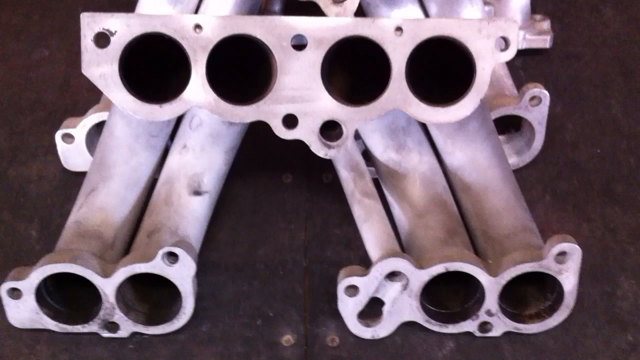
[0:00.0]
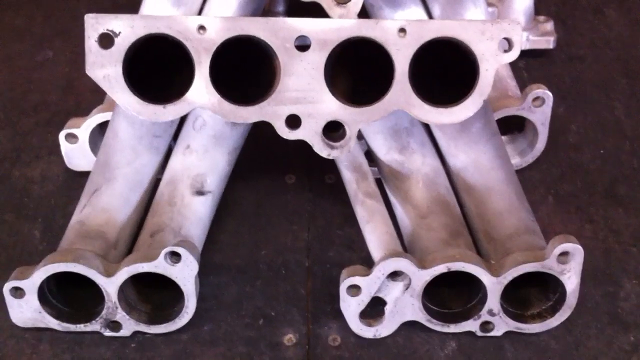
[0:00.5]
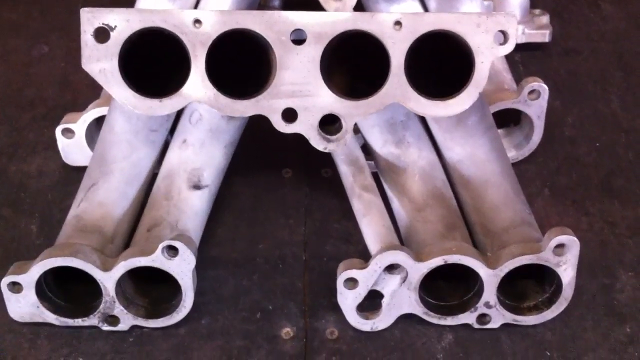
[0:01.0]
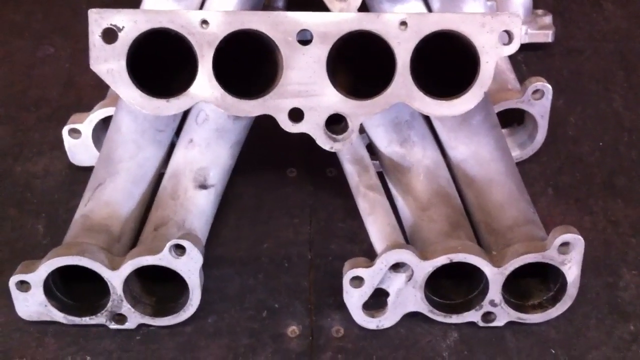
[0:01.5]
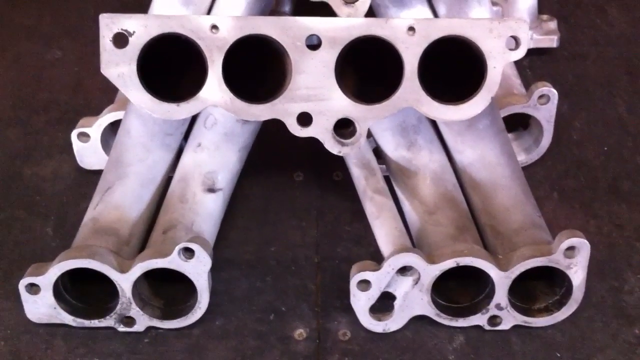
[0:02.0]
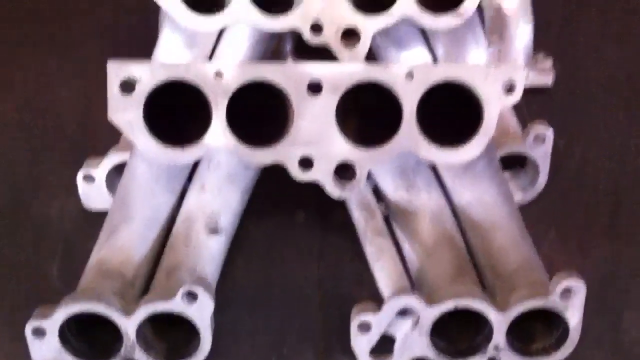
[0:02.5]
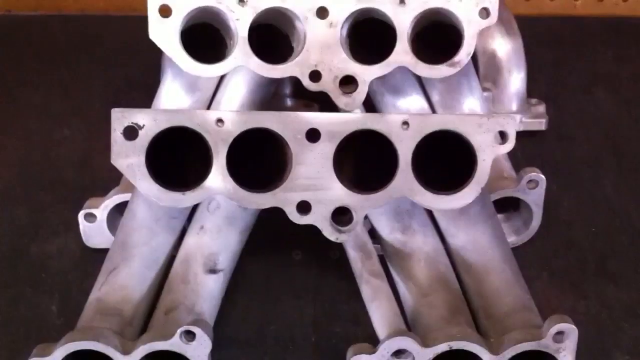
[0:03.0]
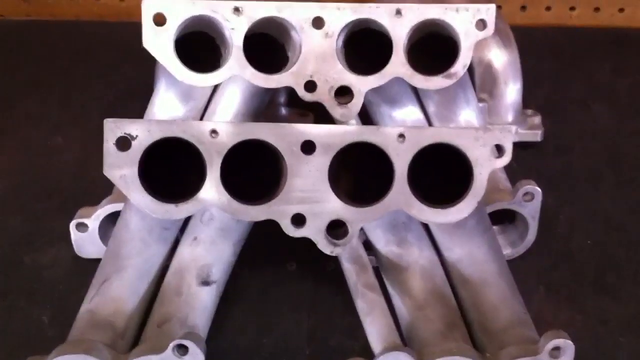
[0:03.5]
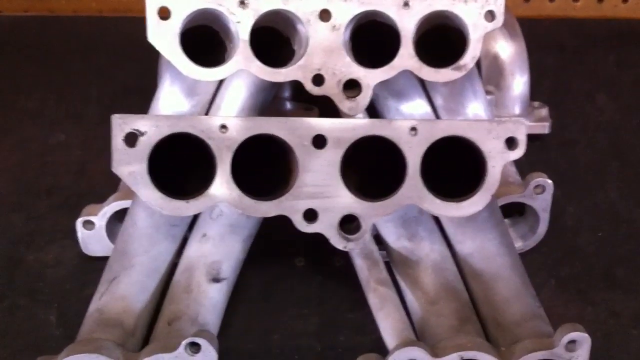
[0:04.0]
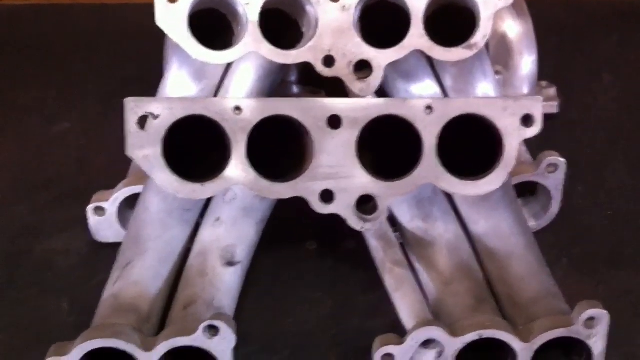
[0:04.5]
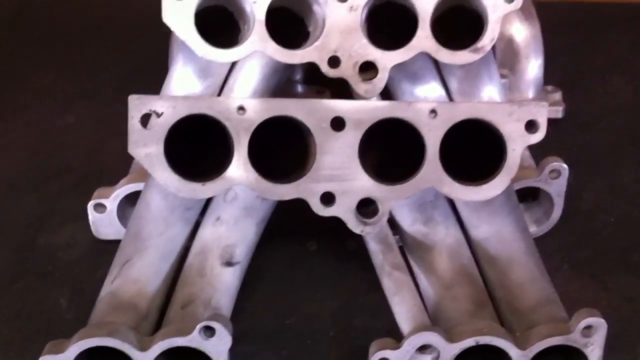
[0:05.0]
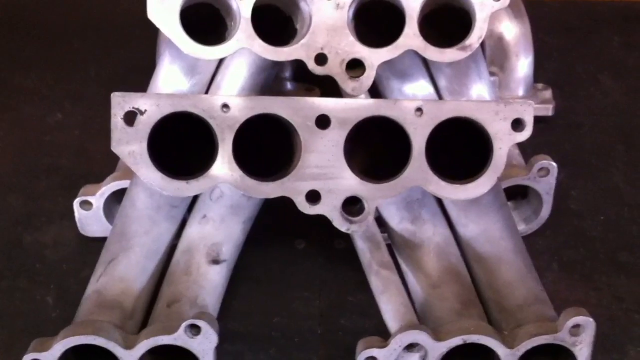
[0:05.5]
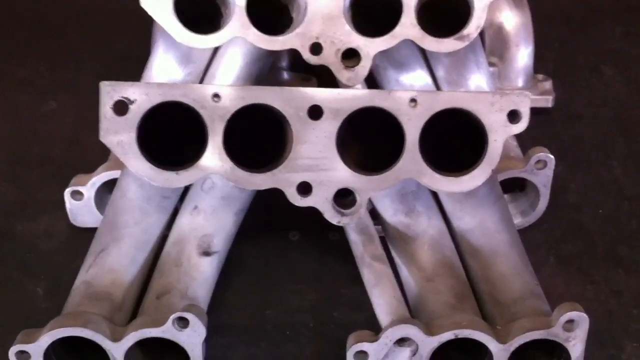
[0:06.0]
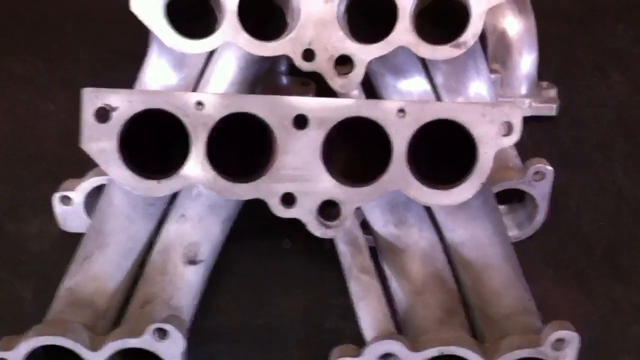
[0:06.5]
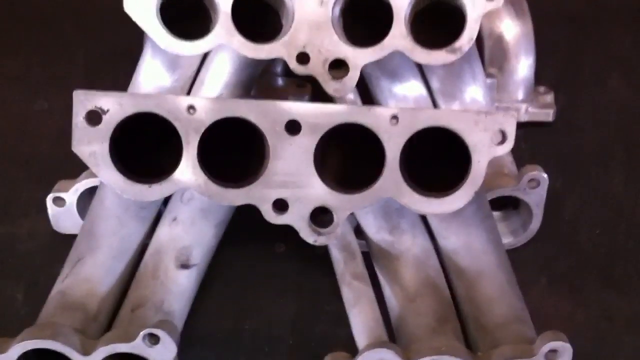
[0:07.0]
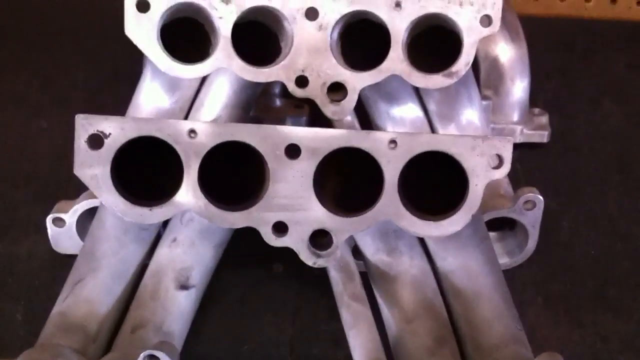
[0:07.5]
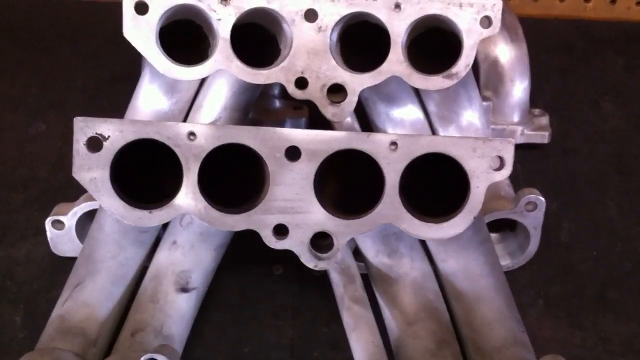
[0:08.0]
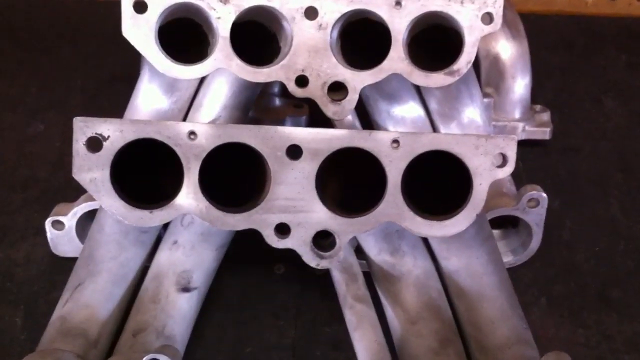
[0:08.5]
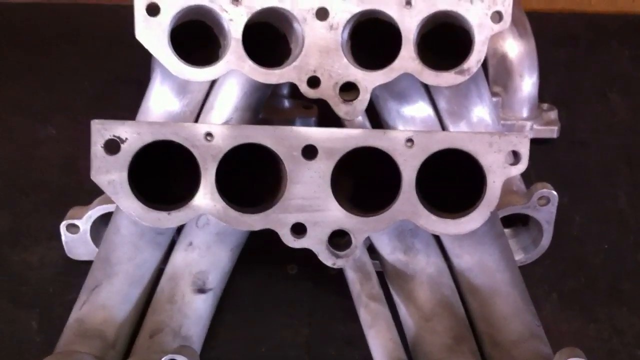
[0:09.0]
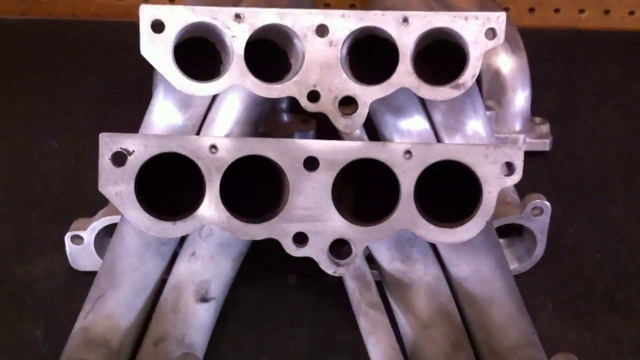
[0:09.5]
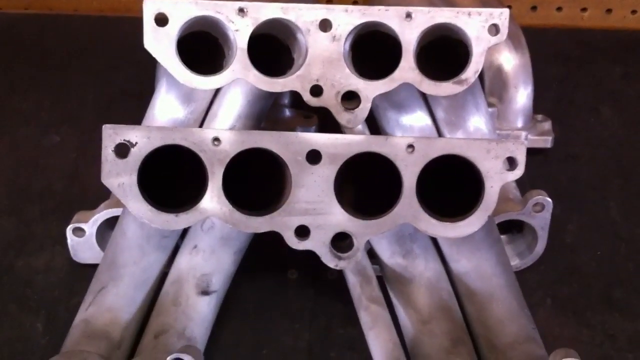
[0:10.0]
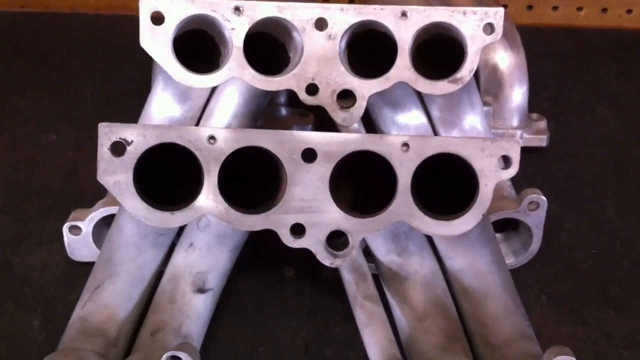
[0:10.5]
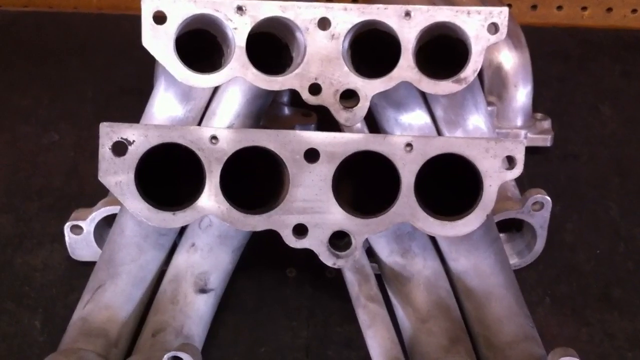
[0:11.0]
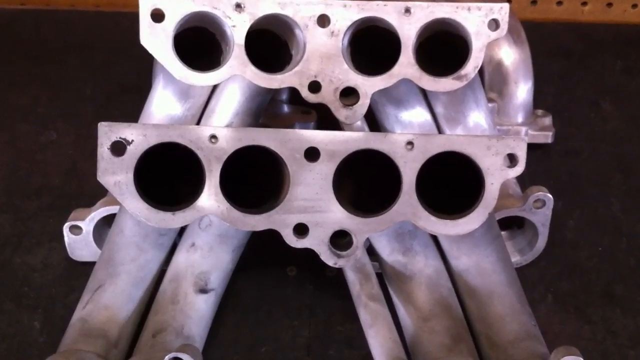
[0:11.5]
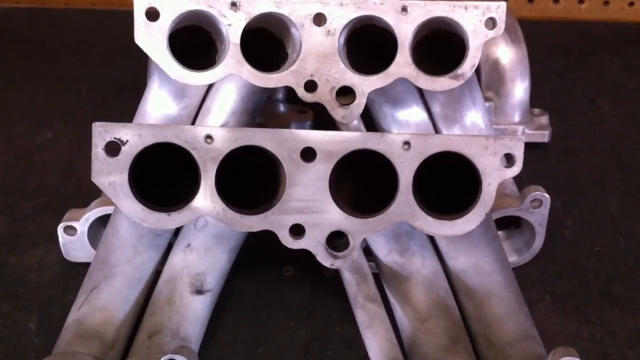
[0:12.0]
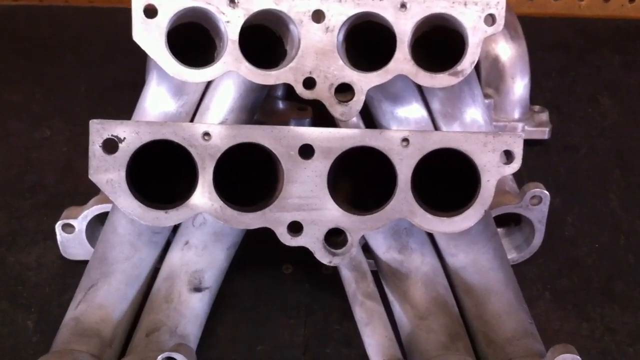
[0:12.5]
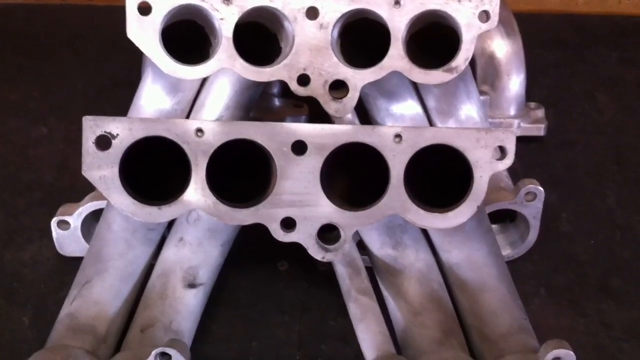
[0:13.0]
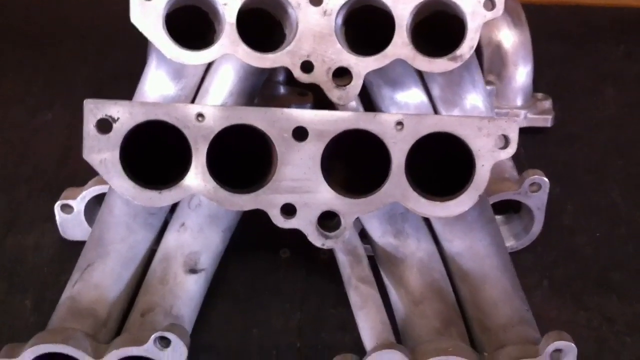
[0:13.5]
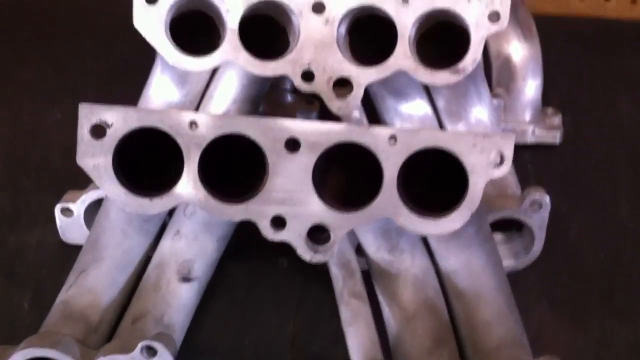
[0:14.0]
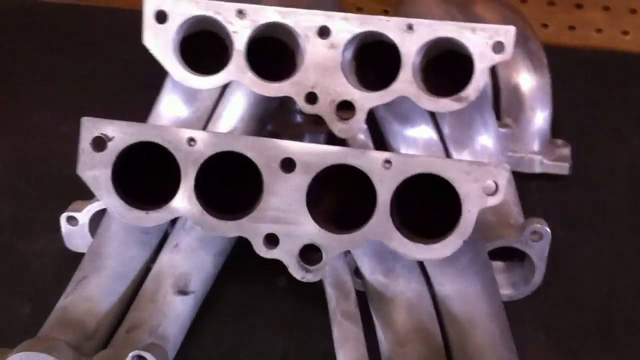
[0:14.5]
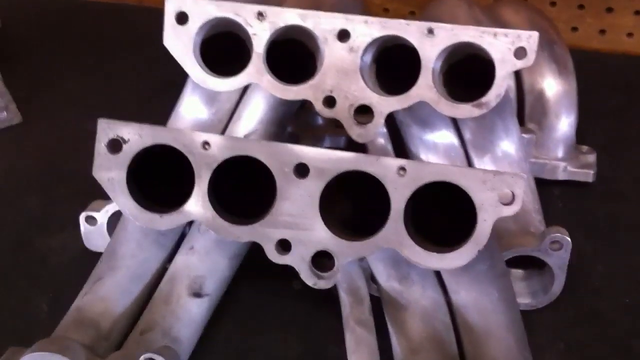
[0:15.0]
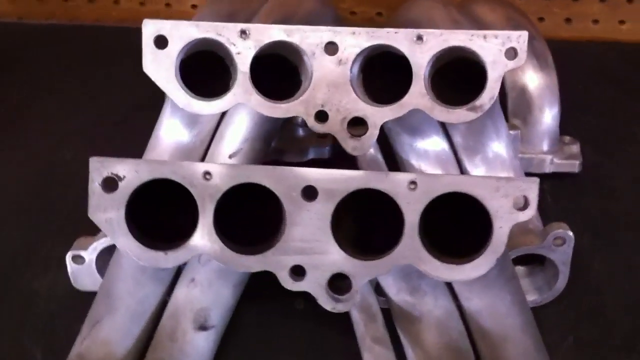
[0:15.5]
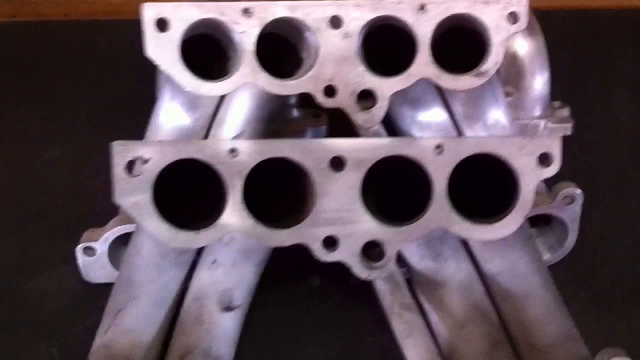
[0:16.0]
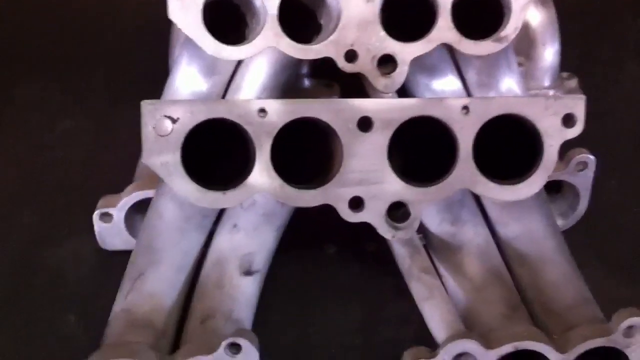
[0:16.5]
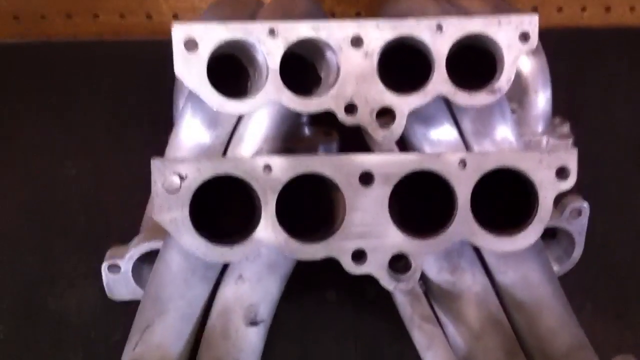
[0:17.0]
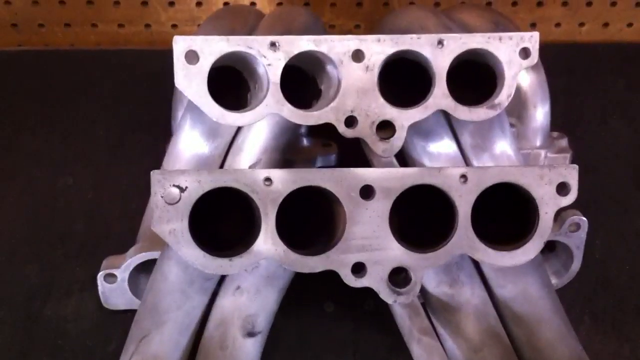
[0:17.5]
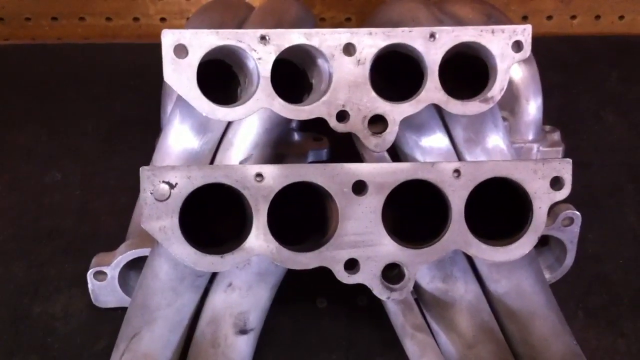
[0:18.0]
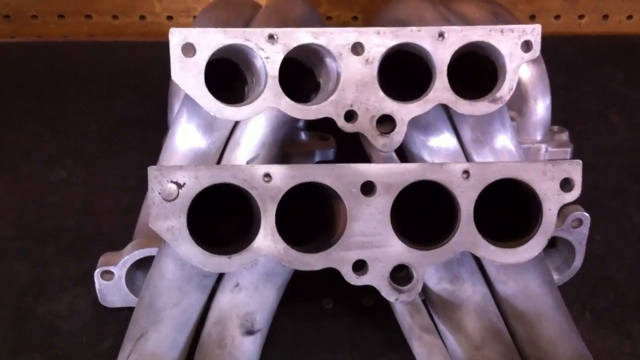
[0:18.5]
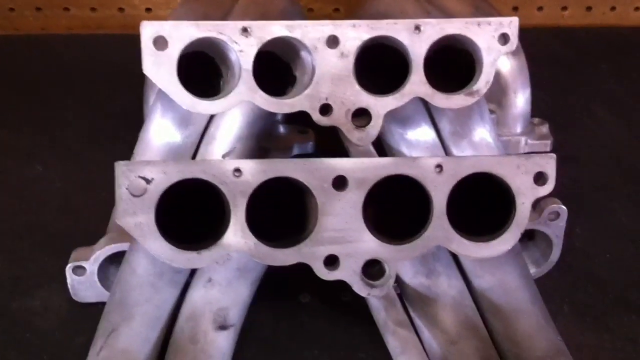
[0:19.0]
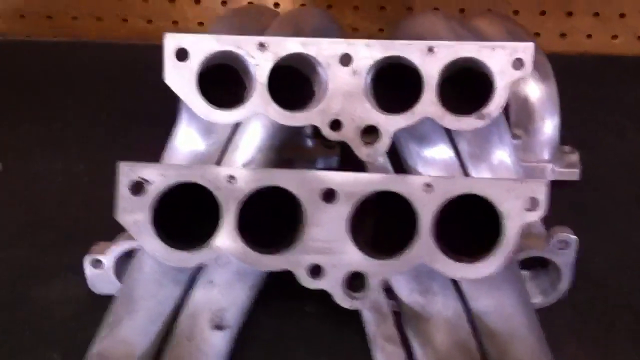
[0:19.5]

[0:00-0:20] Several silver pieces of equipment appear: short pipes that look grouped together, curving around and coming to a top where they all connect, with a hole for each connected pipe. There seem to be two sets. The front set, a foursome, curves up, and behind it is another foursome of pipes with four holes going across the top of the plate that connects them all. Behind the last set is something brown that first looks like a strip but appears to be a pegboard, a brown board with many pinholes in it. The pipes are not touching this brown board.